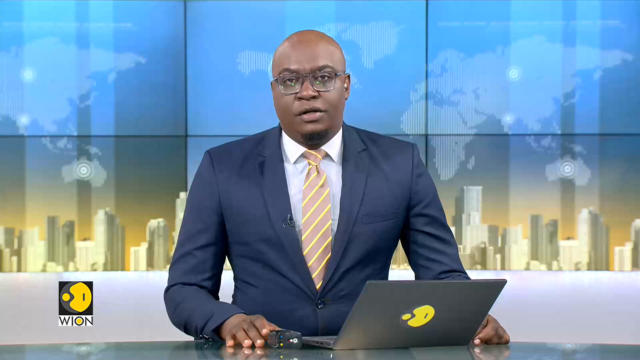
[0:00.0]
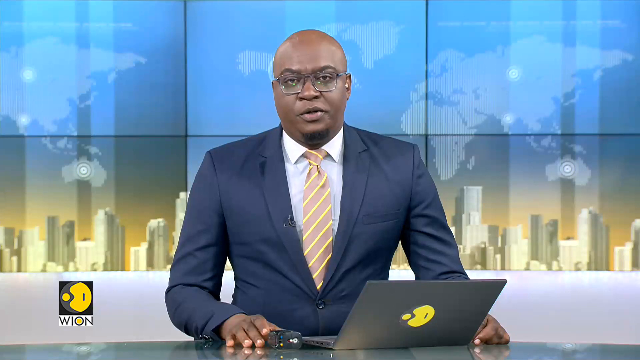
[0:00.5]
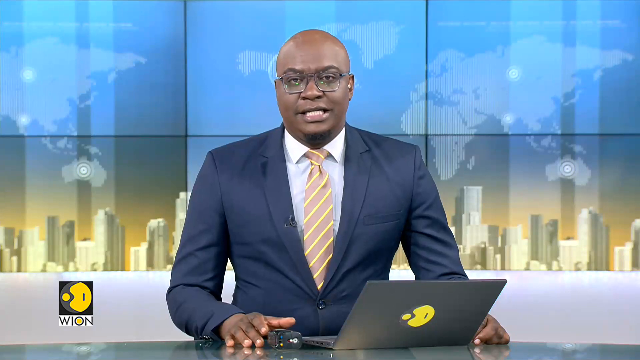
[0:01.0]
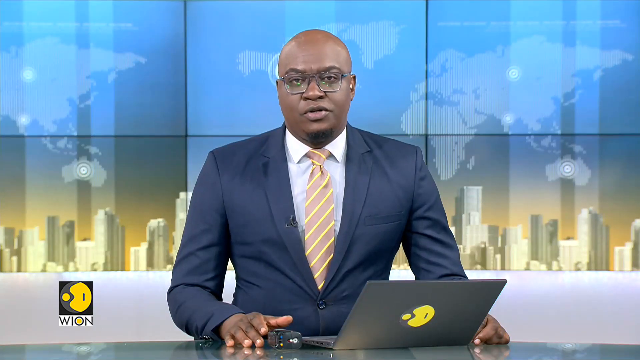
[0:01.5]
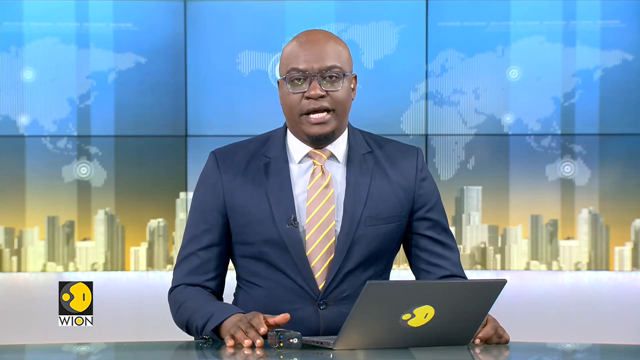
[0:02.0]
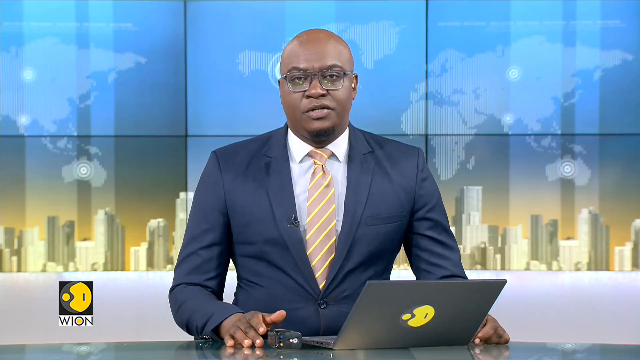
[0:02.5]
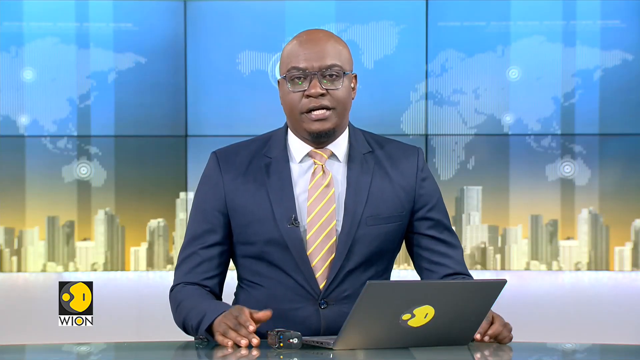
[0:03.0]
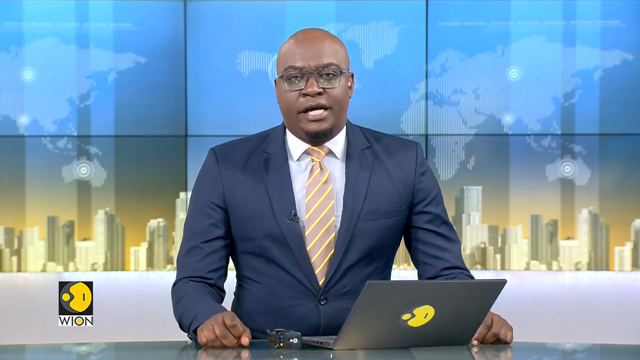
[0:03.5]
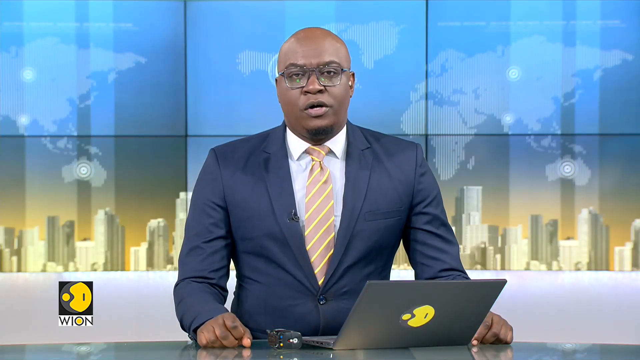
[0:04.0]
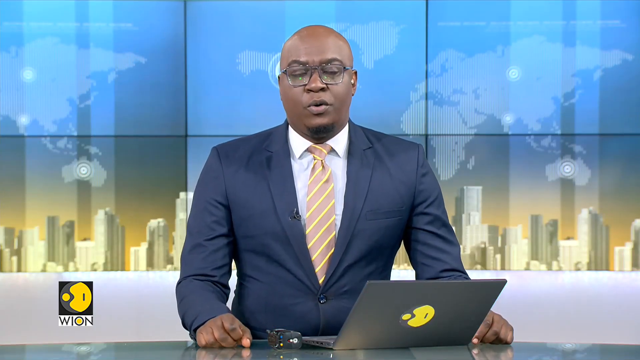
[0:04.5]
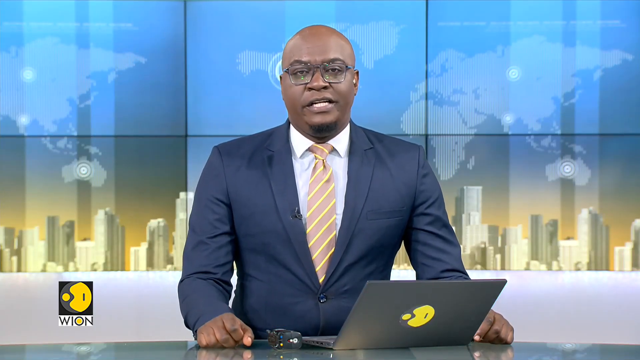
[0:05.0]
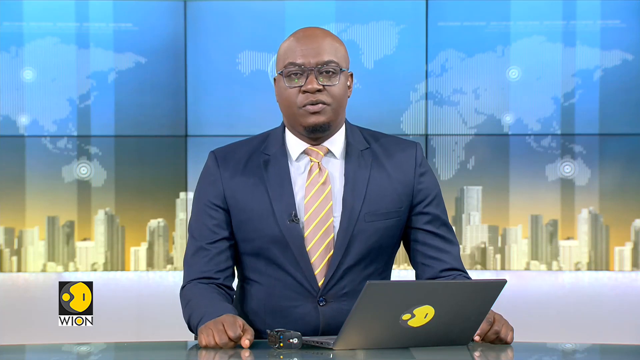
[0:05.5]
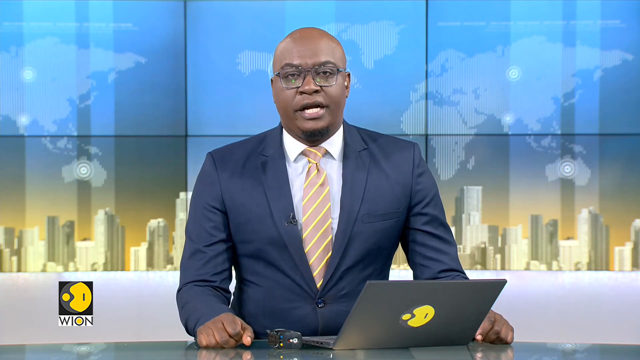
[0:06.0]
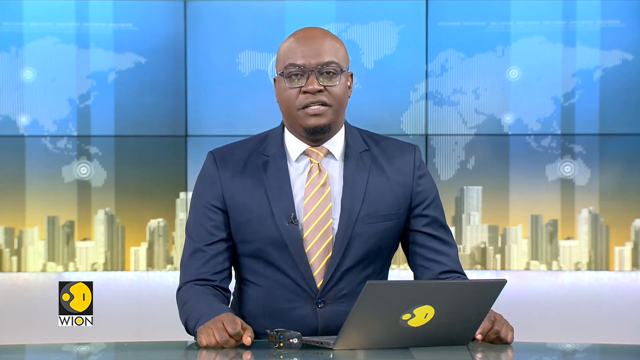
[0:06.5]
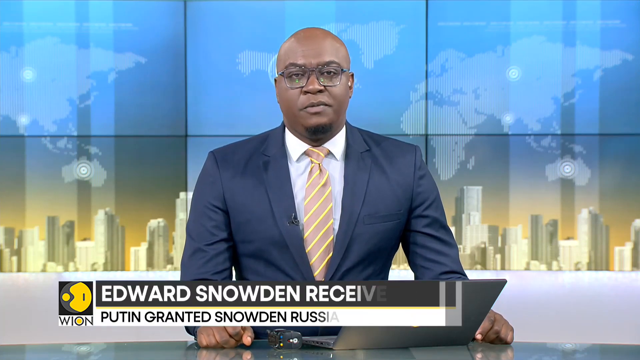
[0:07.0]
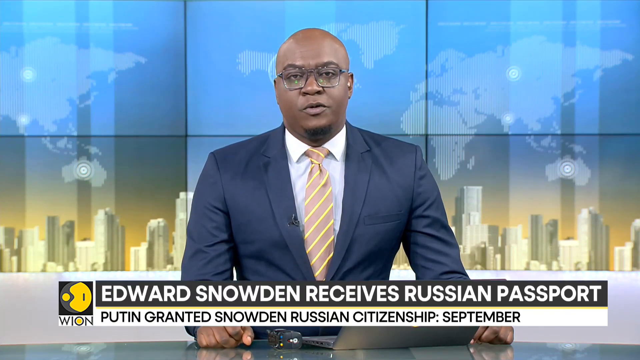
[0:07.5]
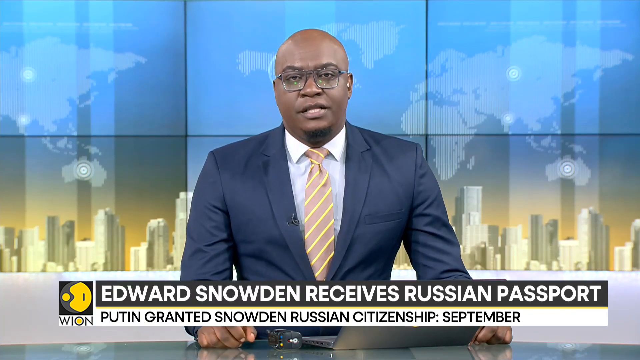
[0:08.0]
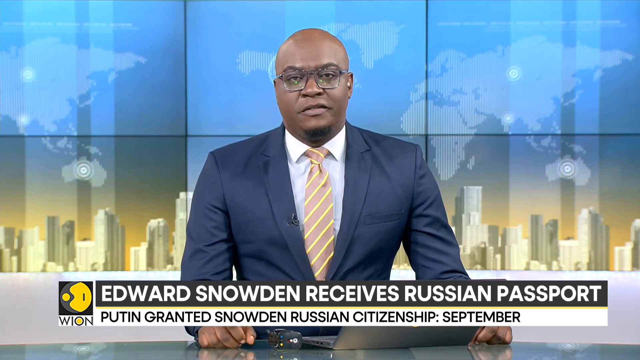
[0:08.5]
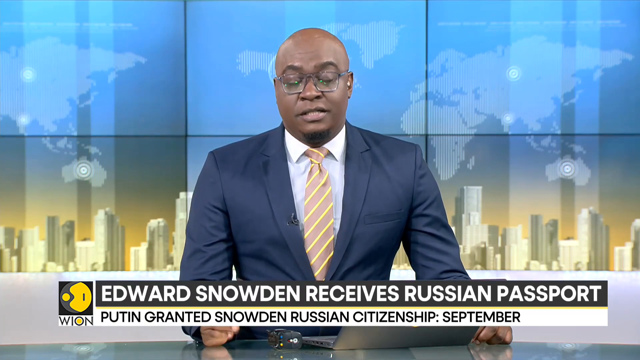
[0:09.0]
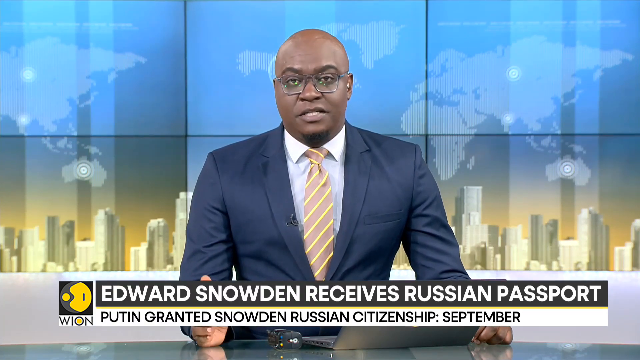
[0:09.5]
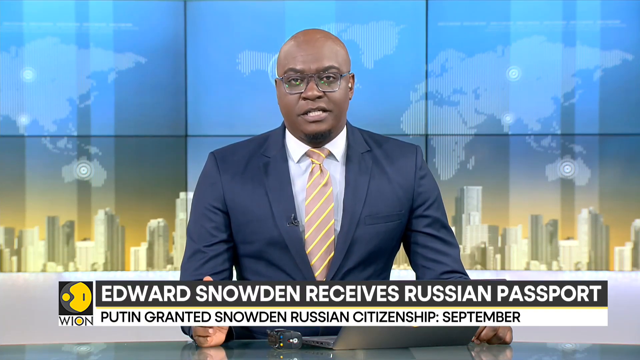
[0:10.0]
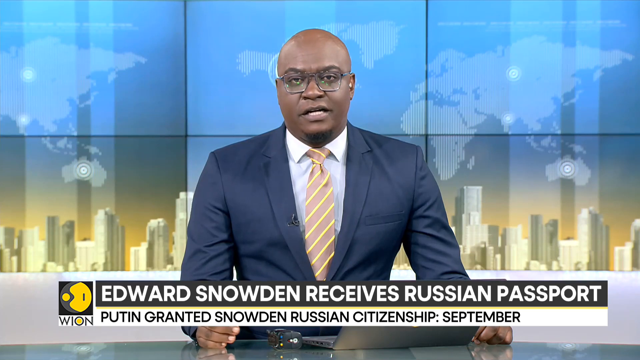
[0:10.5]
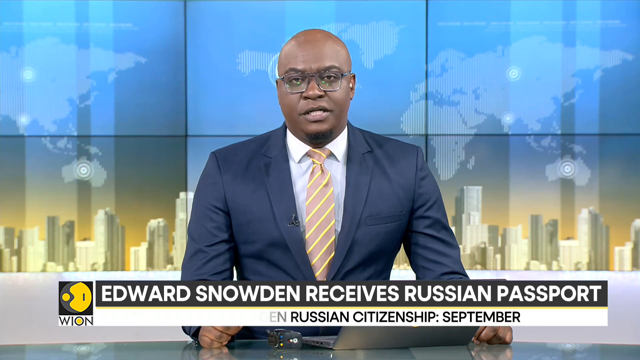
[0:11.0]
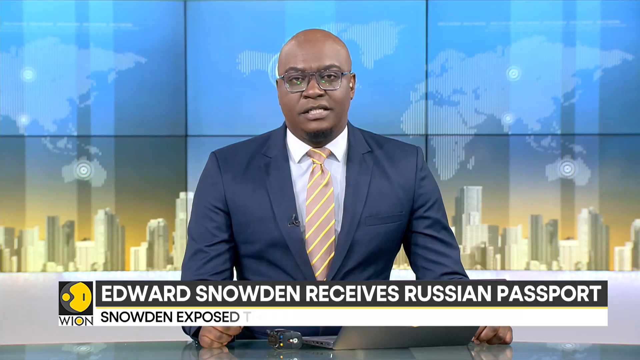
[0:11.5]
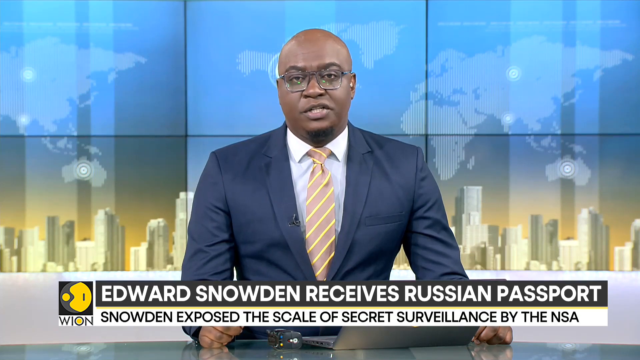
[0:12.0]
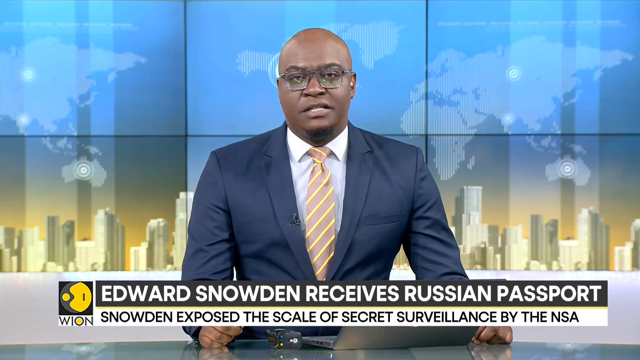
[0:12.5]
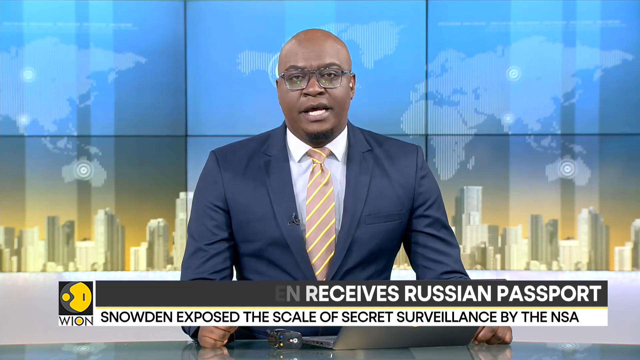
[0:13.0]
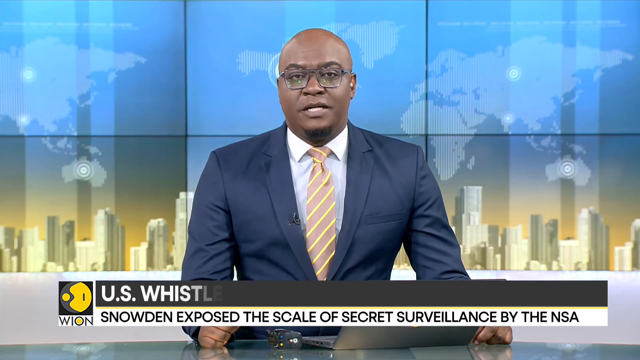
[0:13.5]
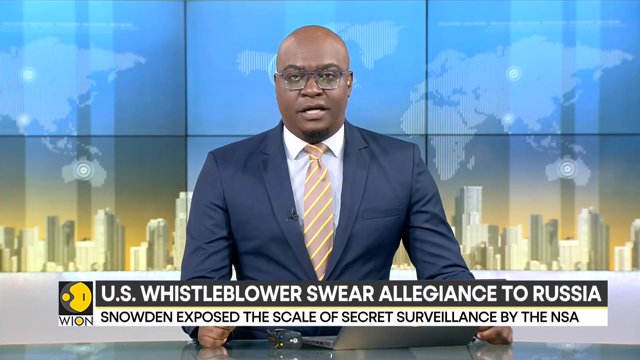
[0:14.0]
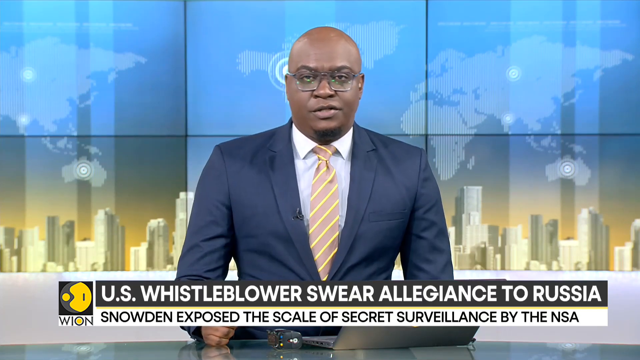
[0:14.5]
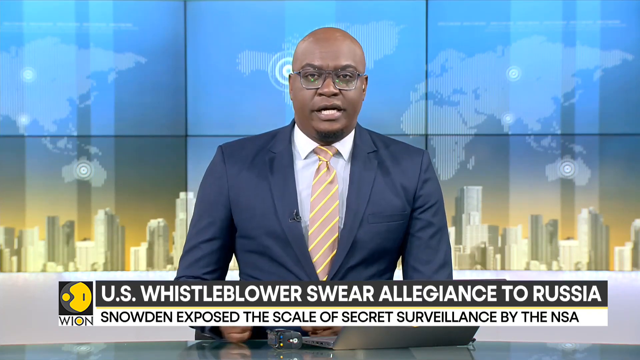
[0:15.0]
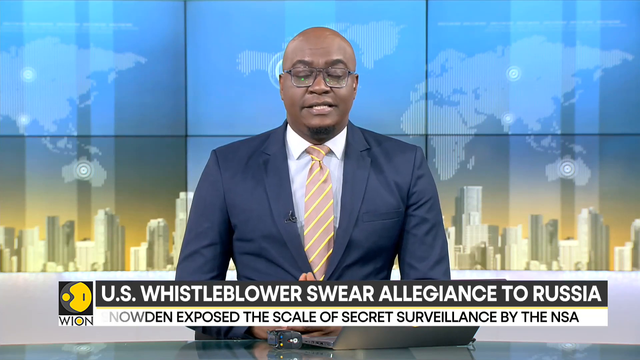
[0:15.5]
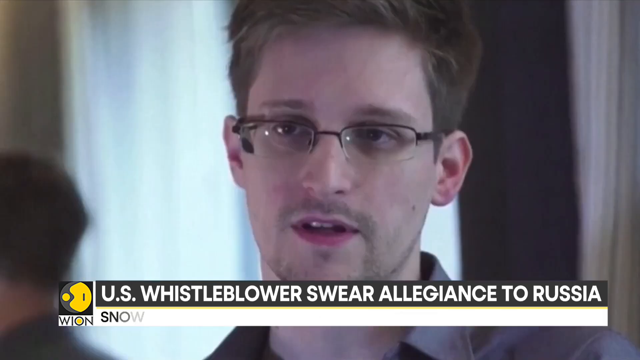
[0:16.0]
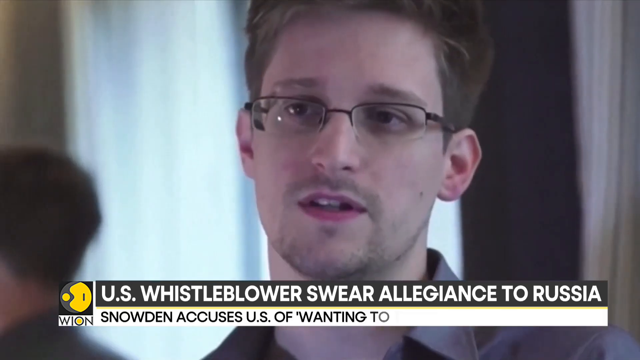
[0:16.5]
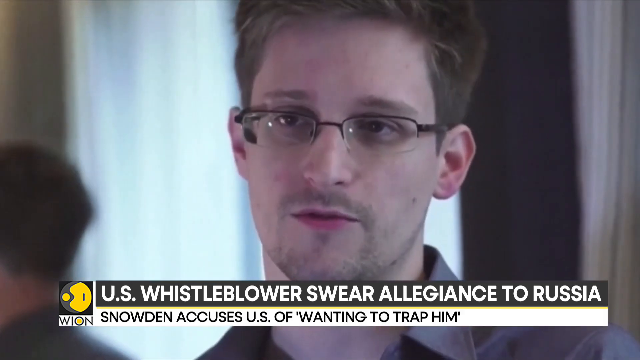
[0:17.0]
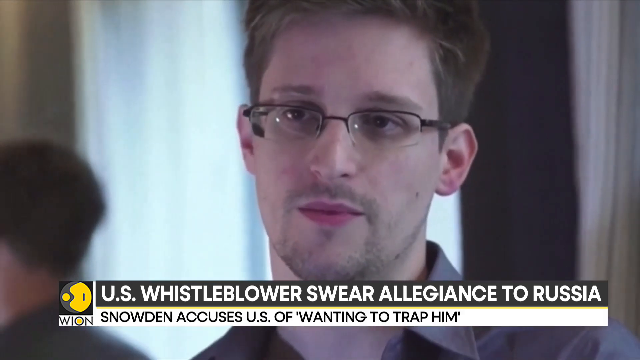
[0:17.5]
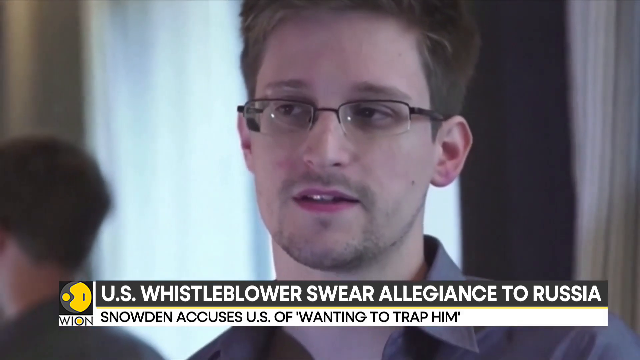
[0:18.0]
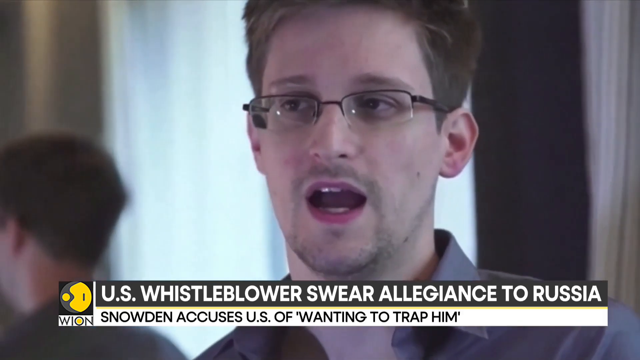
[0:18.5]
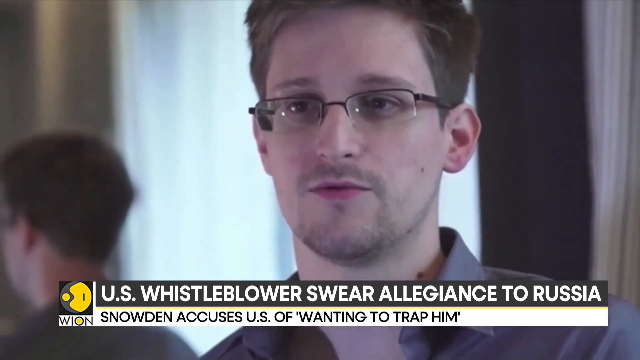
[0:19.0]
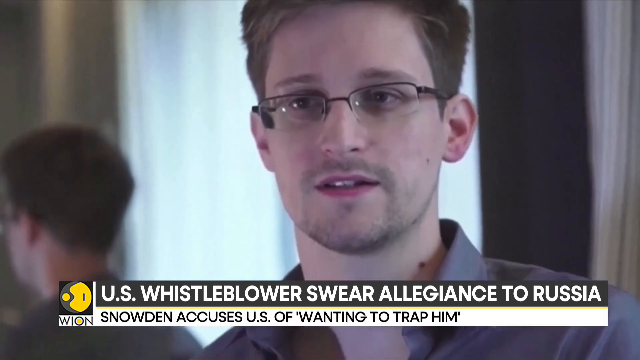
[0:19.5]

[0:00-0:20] A man wearing glasses, a dark blue suit, a white shirt and a light striped tie presents a global news broadcast. A banner reads "U.S. whistleblower swear allegiance to Russia," and the text also notes that Edward Snowden receives a Russian passport and that "Snowden exposed the scale of secret surveillance by the NSA." There is a laptop, or some kind of monitor, on the man's desk, and behind him the backdrop is a cityscape superimposed on a map of the world showing all the continents, with a target on Australia. The station is WJON. He stays very still and looks very serious while he talks. A video clip then shows Snowden talking.